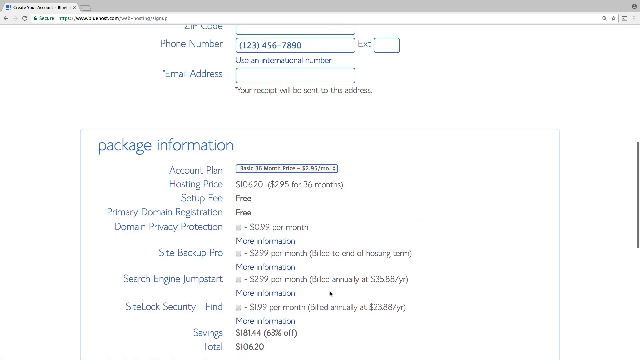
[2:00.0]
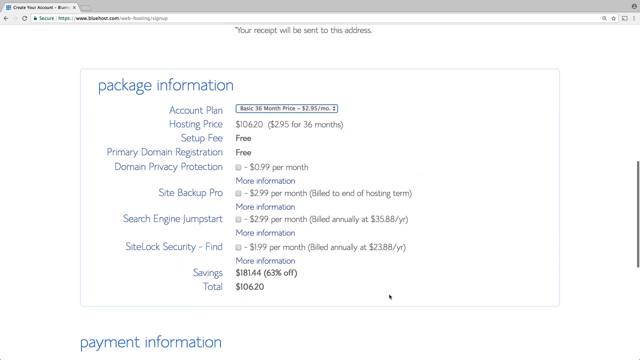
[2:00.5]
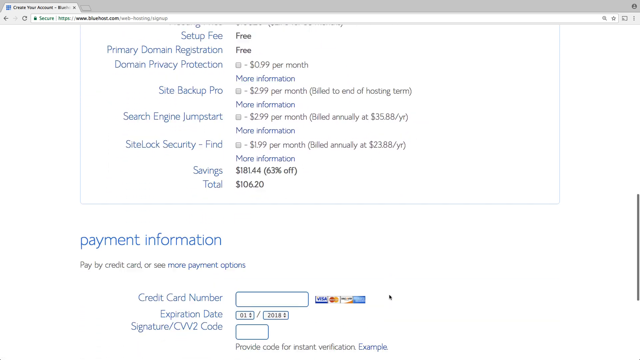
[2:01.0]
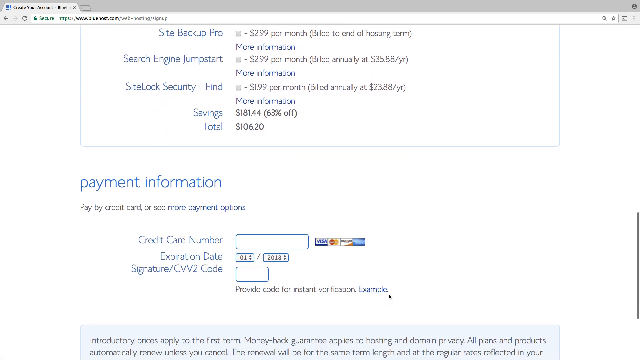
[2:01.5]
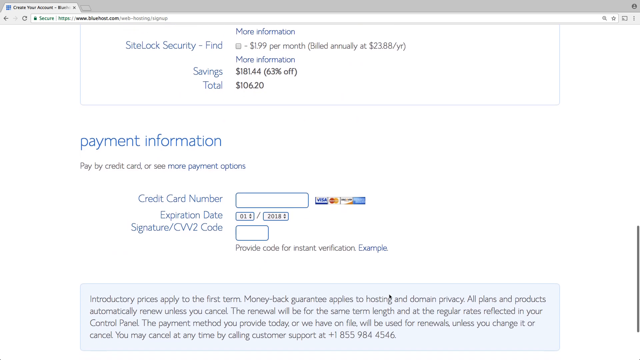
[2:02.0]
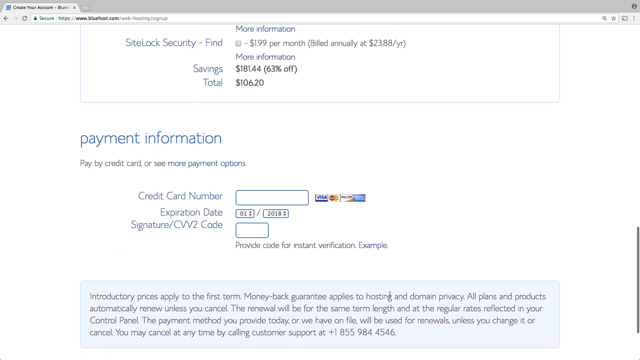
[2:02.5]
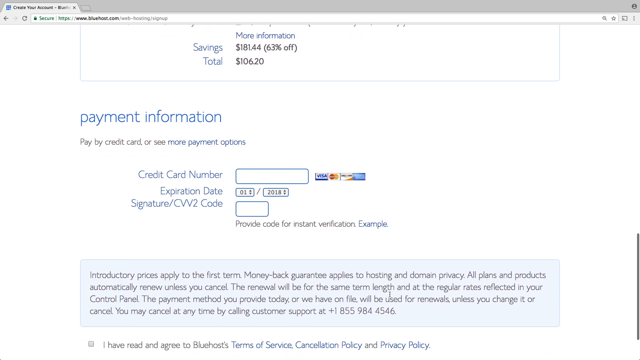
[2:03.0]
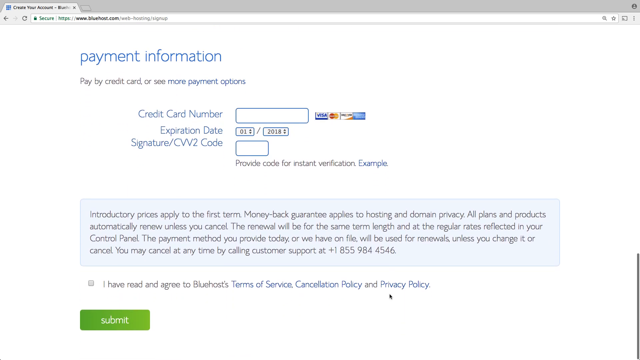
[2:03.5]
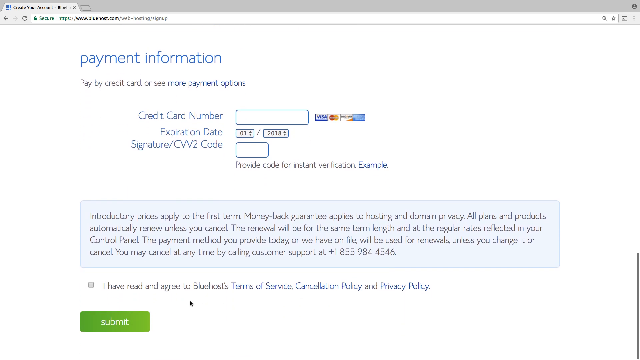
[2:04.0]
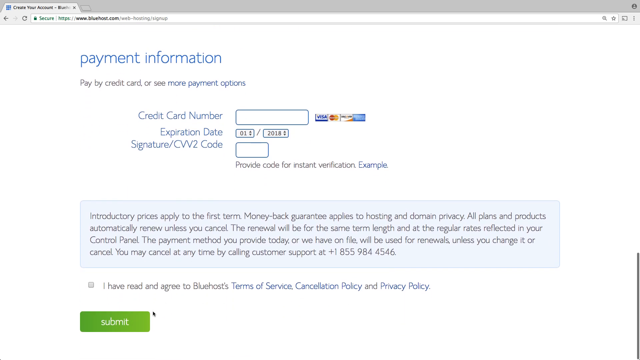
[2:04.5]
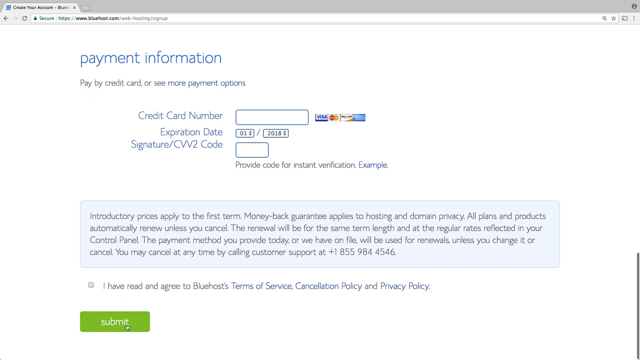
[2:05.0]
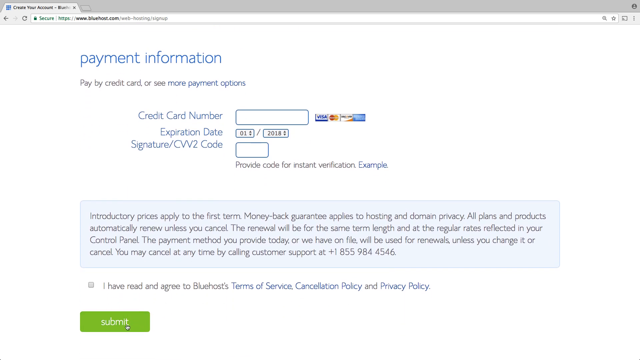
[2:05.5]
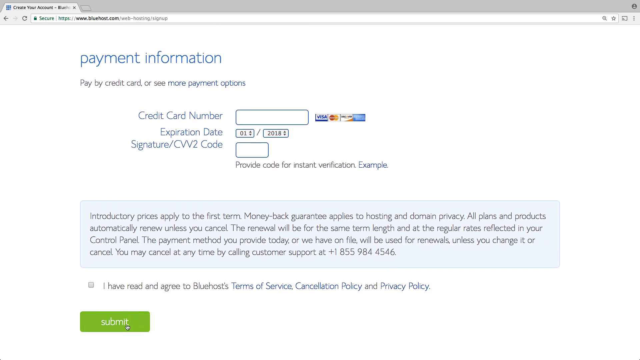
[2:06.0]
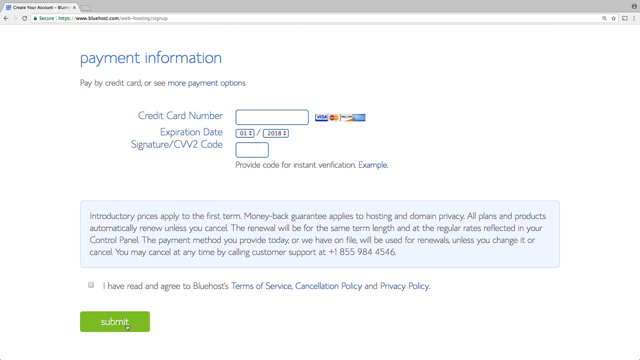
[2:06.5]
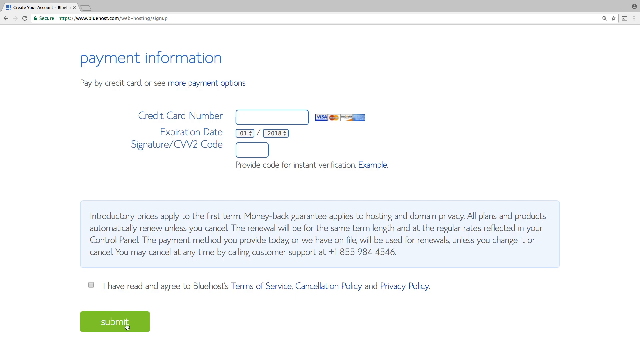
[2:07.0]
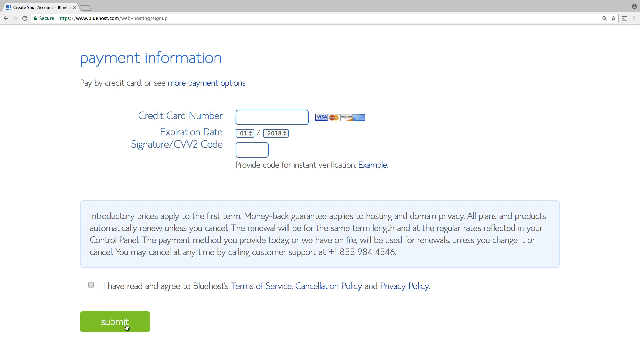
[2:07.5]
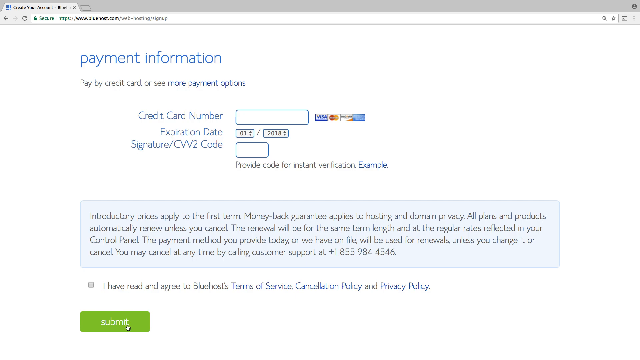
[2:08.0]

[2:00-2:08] The user scrolls down to payment information, with an option to pay by credit card and possibly other payment options. There are spaces for credit card numbers, expiration dates, signatures, and CW2 codes, along with introductory prices. The user then returns to the Bluehost home page, showing the girl sitting on the couch in the pink scarf, kind of looking off to the side where the text reads "the best web hosting". The tiered payment plans are then shown once again.